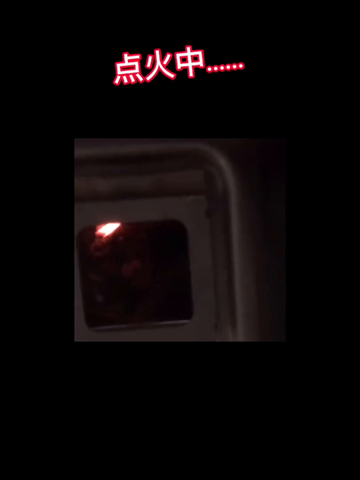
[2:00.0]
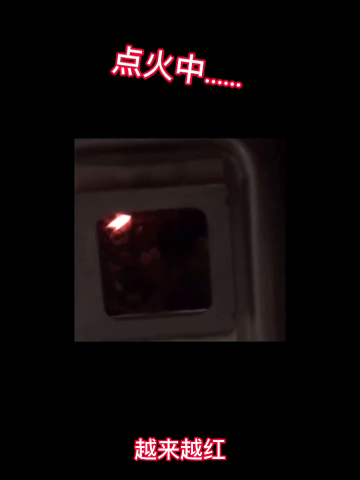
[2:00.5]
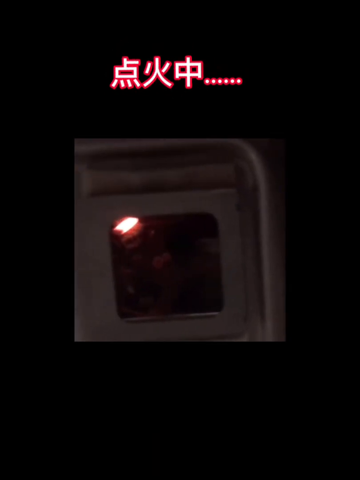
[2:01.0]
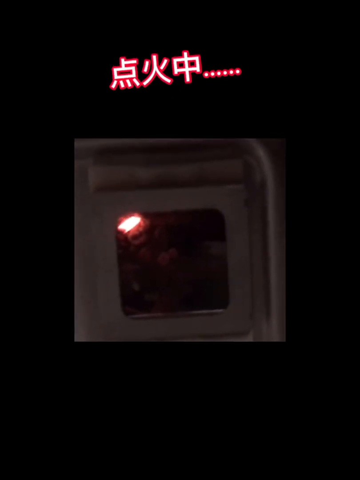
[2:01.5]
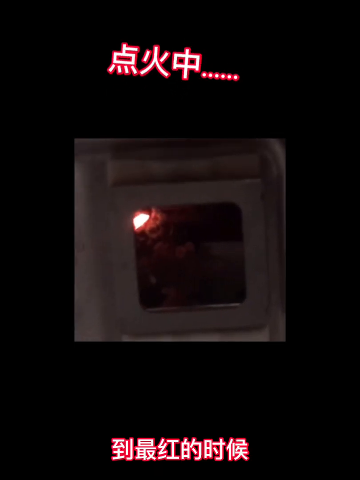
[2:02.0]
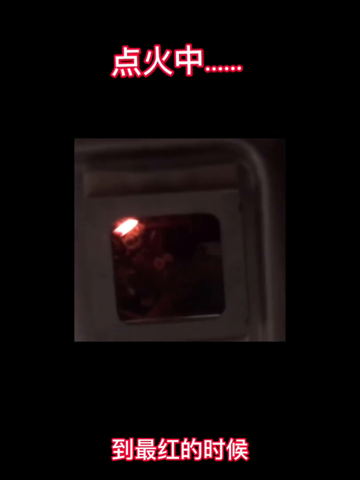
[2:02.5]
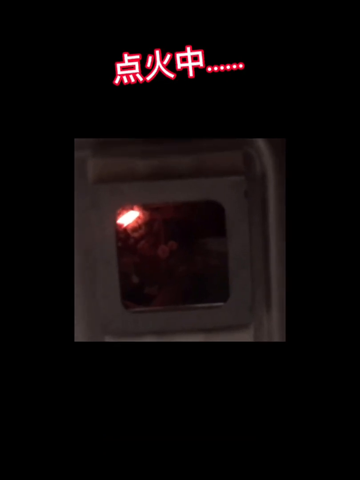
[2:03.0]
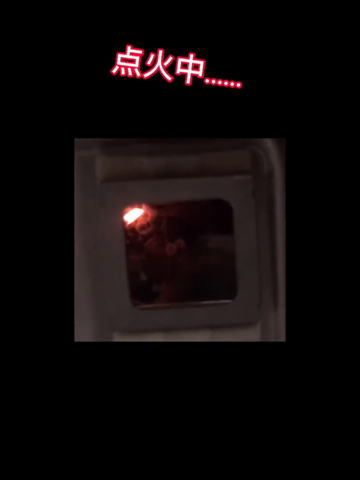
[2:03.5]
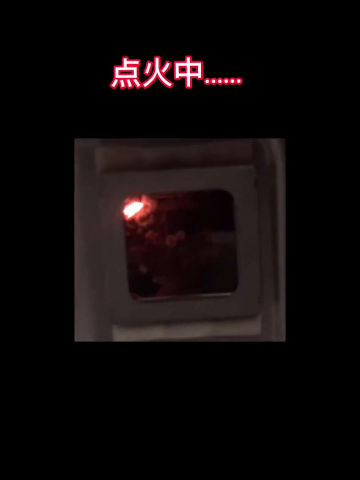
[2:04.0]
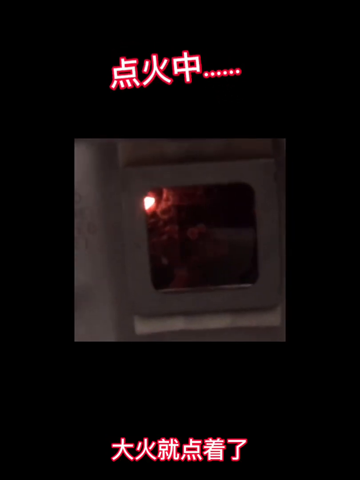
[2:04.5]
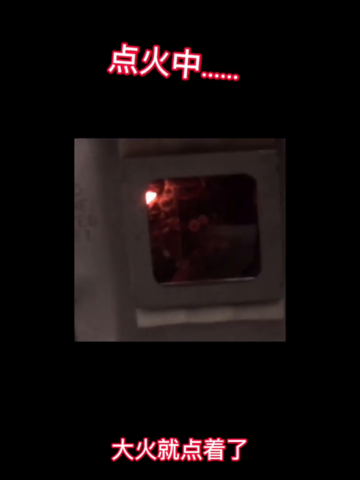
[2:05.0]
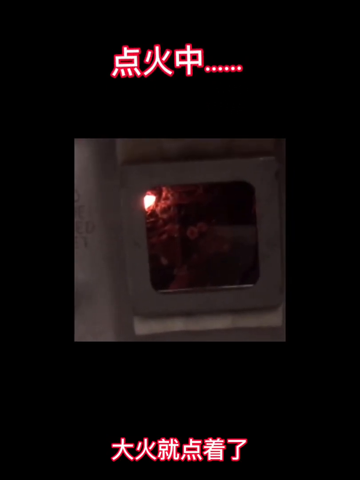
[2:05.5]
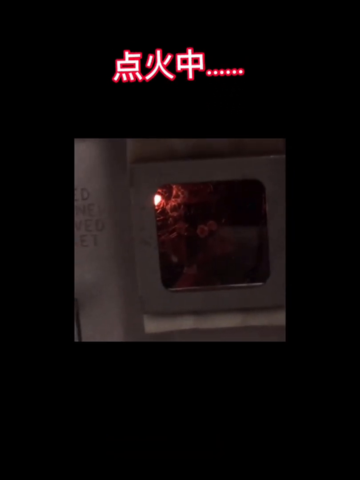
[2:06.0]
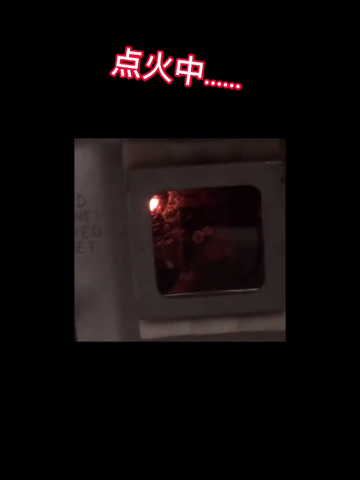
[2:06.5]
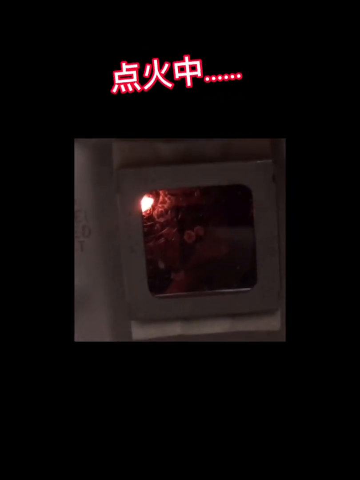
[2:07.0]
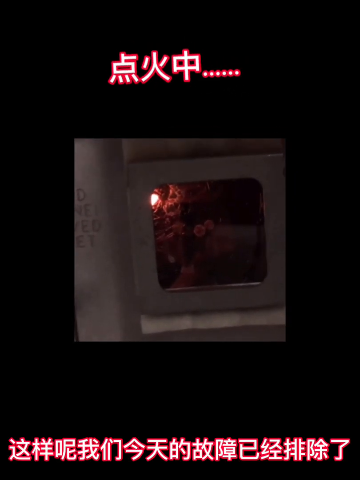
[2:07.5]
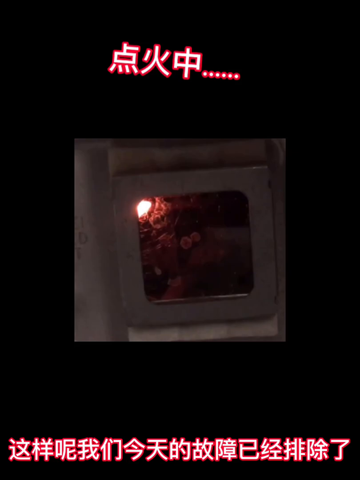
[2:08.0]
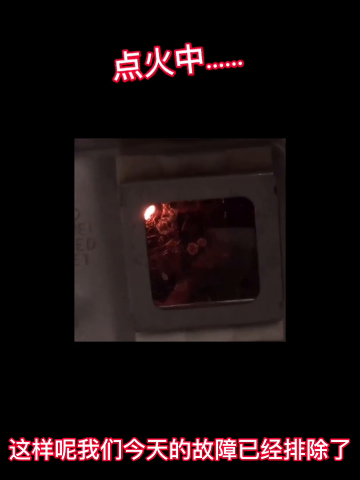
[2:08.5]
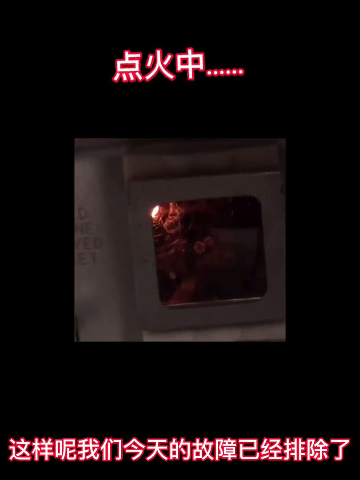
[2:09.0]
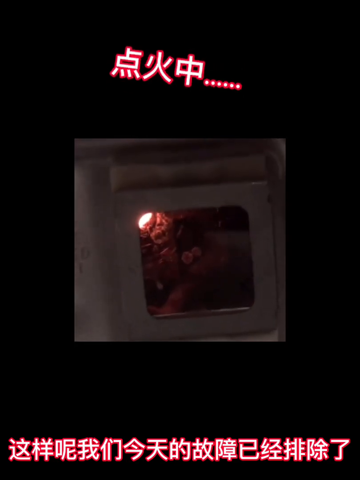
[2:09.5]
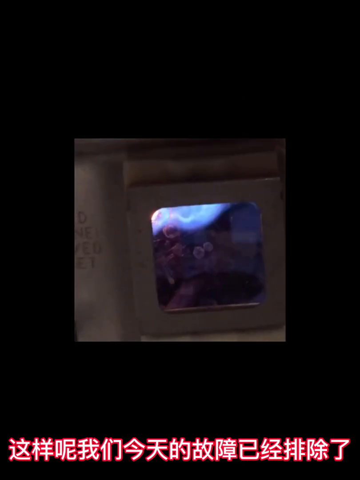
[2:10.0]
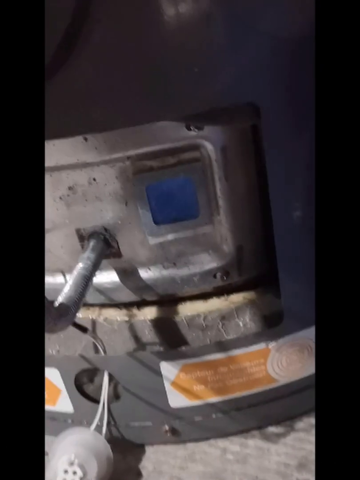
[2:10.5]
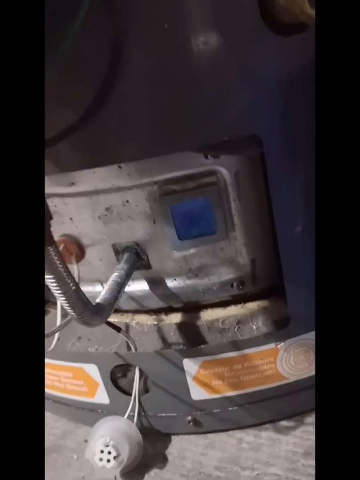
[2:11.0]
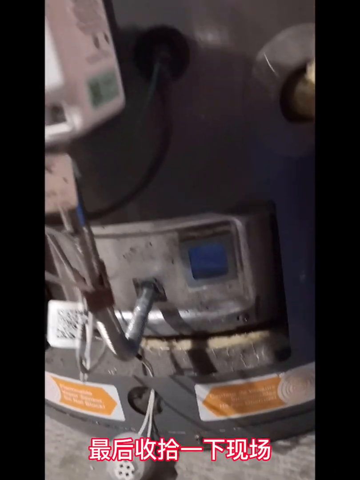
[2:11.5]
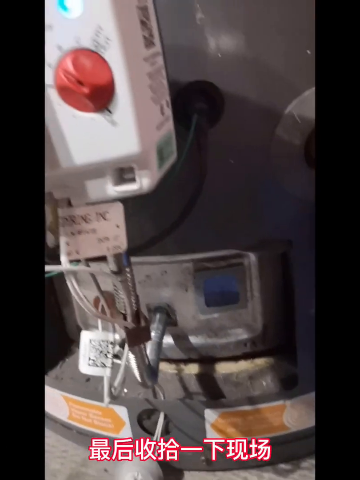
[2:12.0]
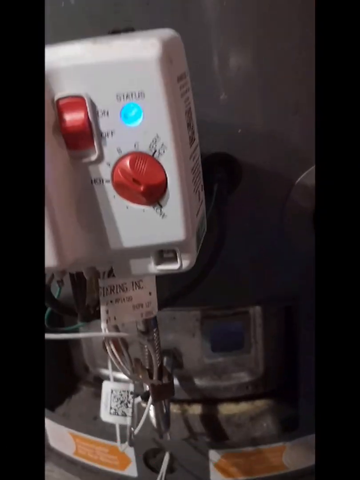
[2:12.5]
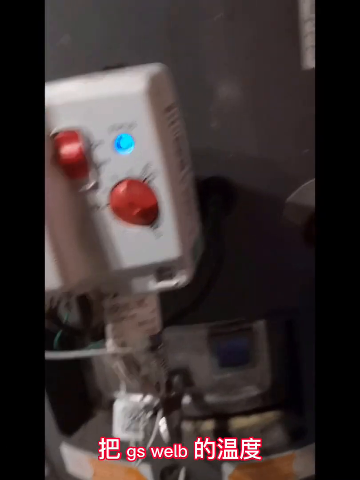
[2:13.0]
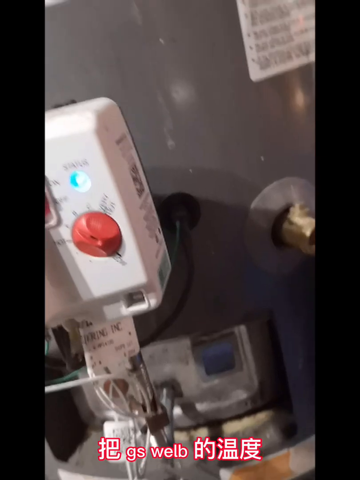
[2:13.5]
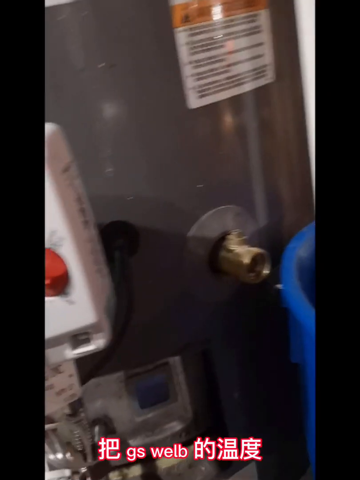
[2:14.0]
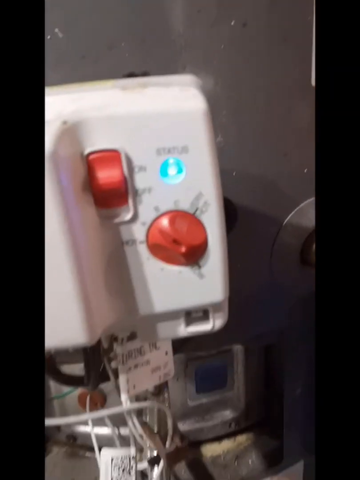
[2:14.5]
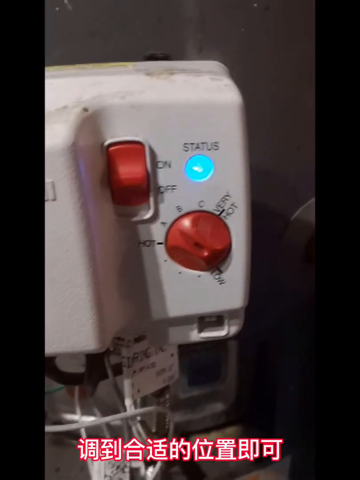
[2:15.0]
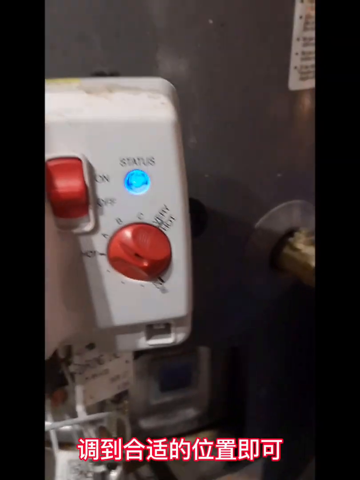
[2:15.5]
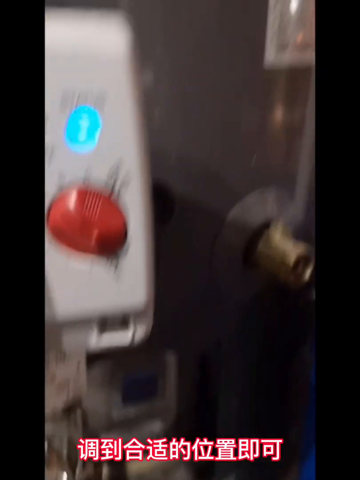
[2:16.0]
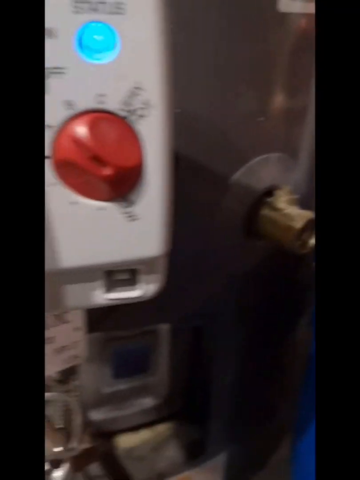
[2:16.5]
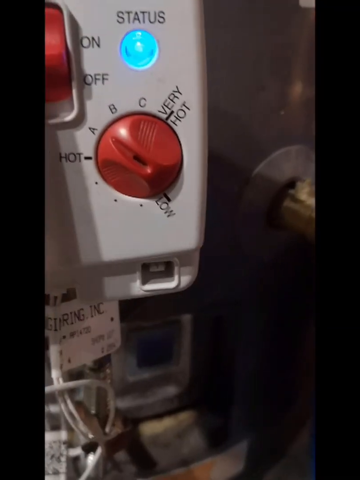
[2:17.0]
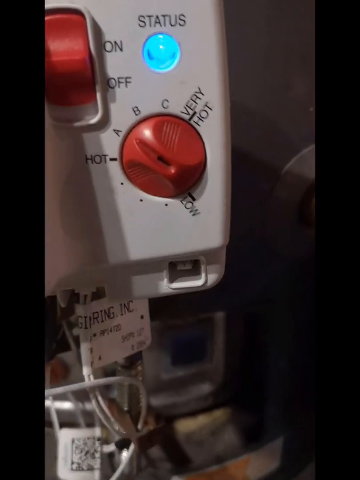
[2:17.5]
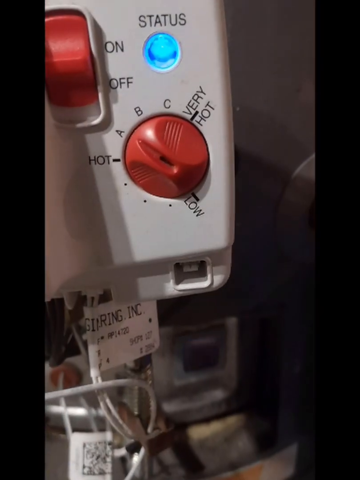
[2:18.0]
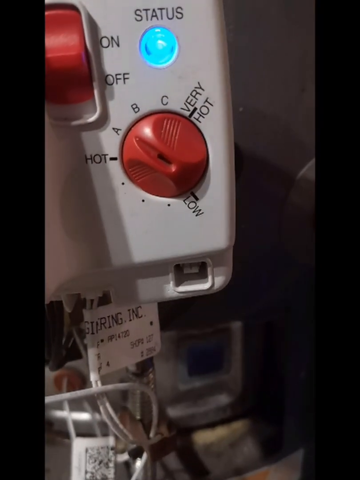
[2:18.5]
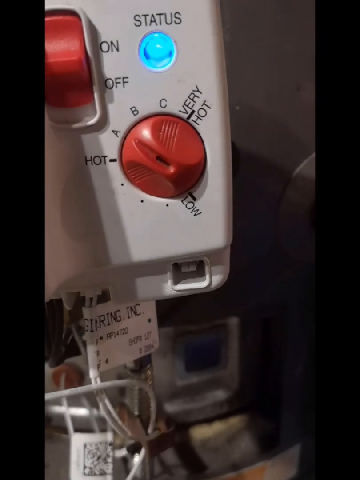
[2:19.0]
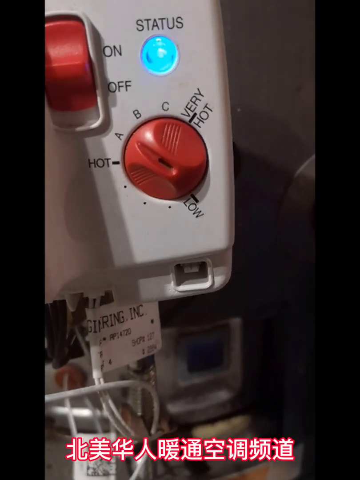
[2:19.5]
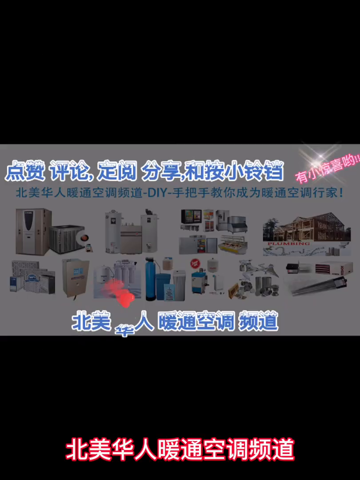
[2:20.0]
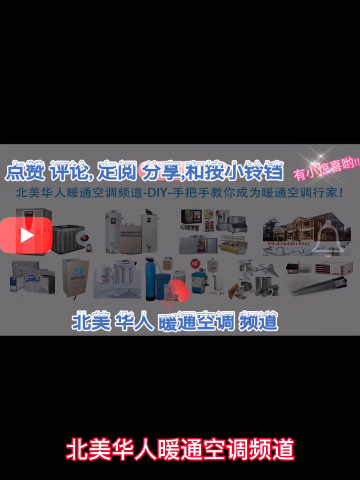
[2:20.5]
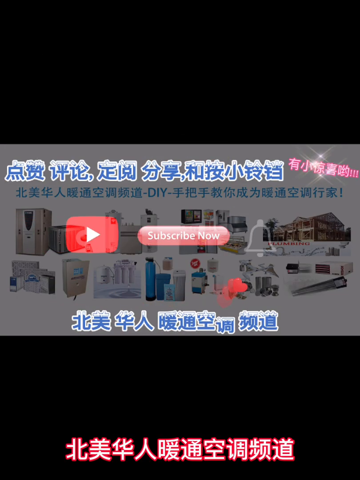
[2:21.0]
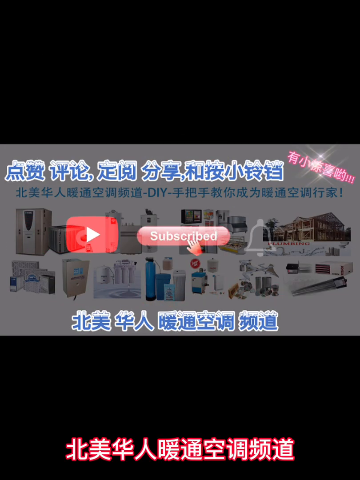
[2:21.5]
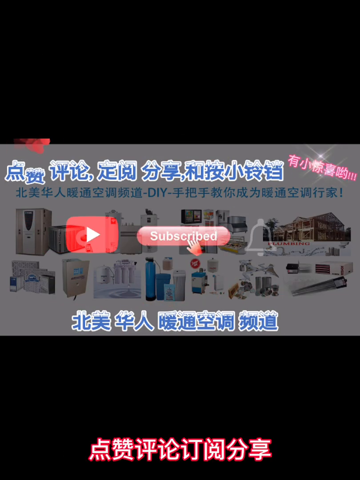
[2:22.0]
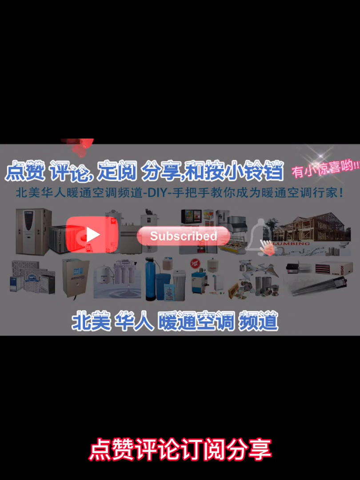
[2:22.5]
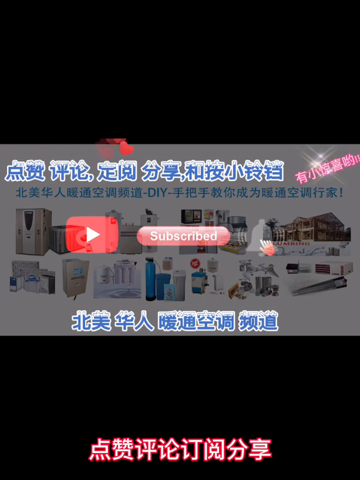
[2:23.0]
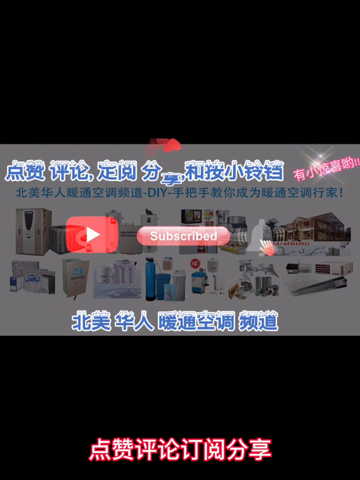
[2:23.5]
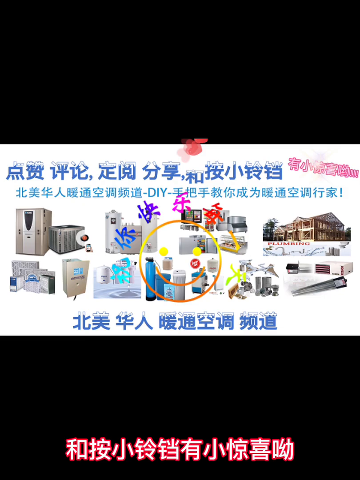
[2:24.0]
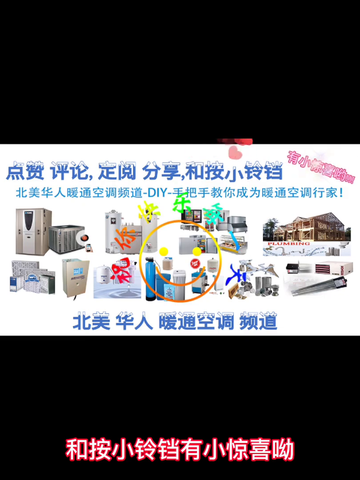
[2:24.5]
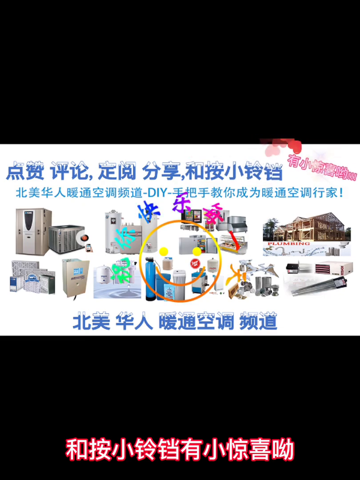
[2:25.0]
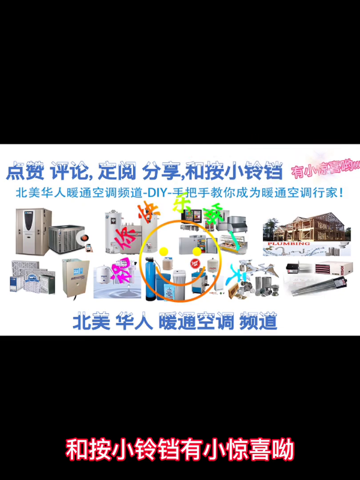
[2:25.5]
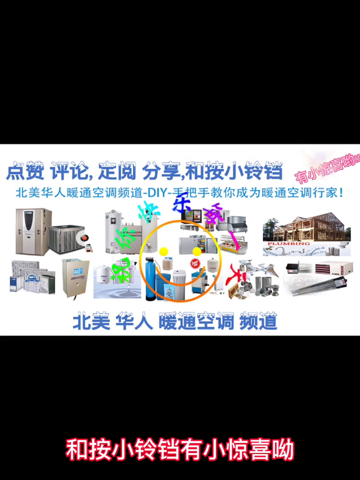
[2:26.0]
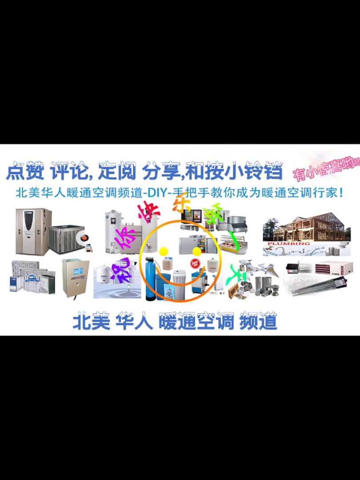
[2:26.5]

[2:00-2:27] The water heater turns on, and a flame comes on at the bottom of it; it apparently is working correctly. The video ends with an outro slide.